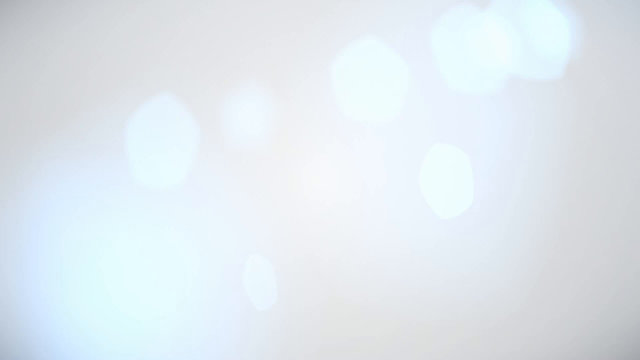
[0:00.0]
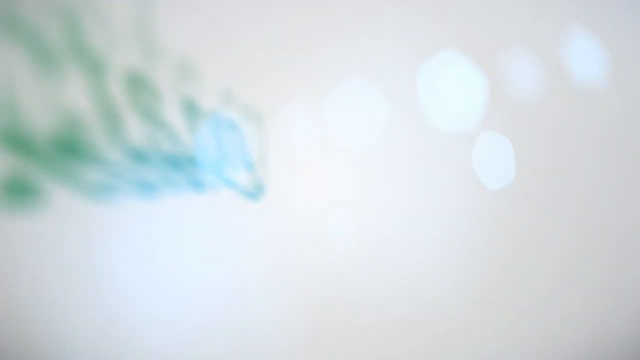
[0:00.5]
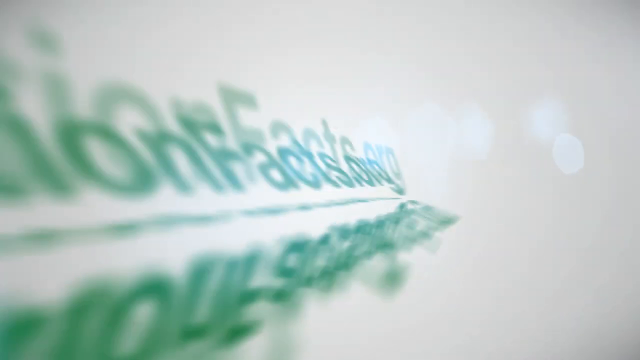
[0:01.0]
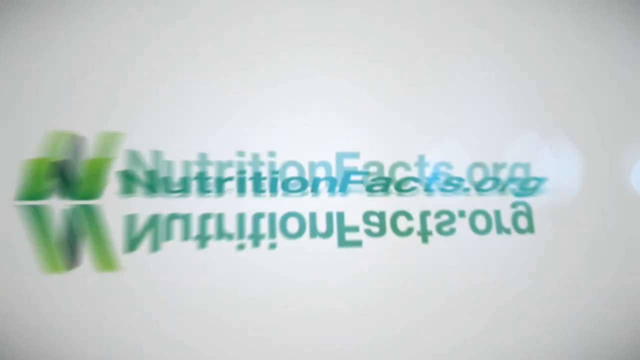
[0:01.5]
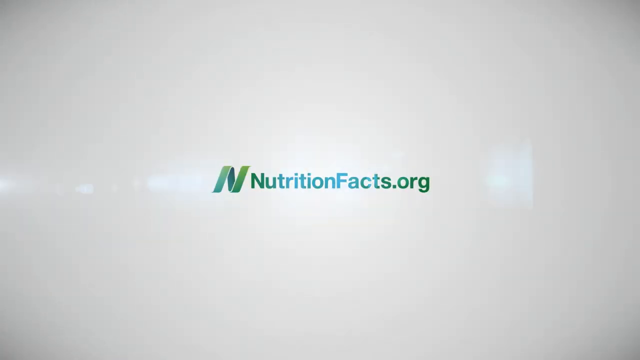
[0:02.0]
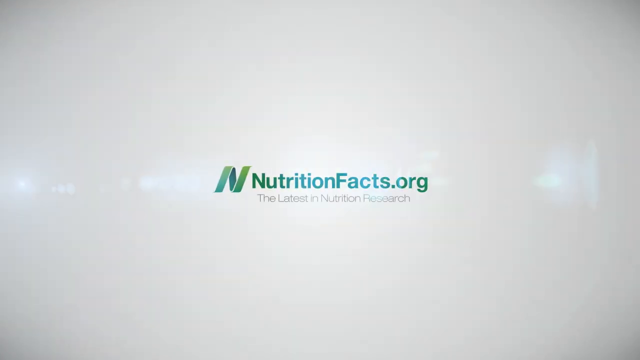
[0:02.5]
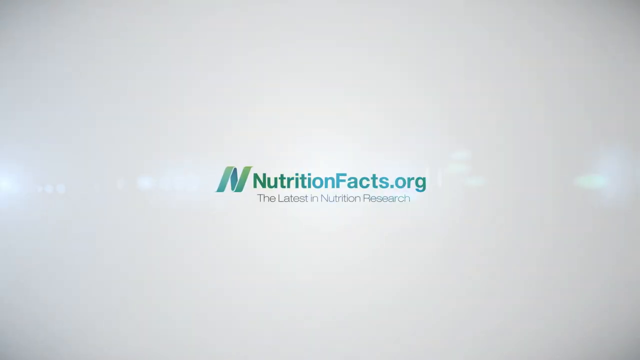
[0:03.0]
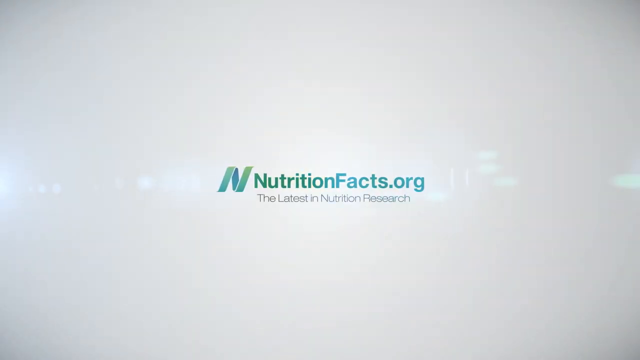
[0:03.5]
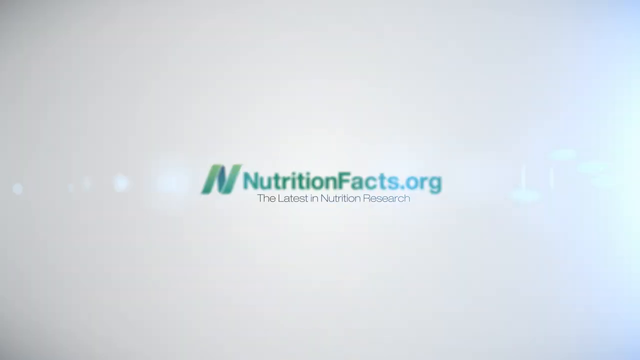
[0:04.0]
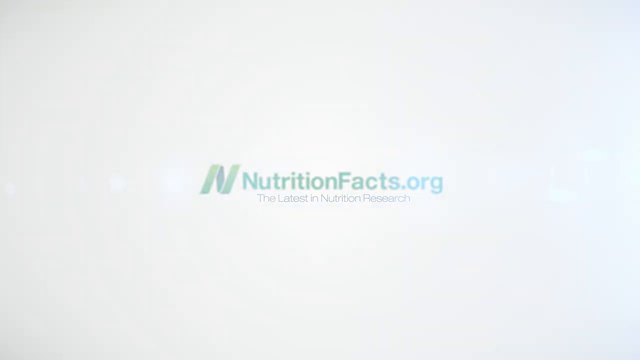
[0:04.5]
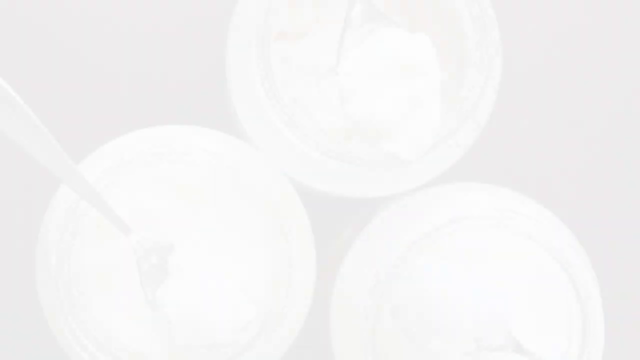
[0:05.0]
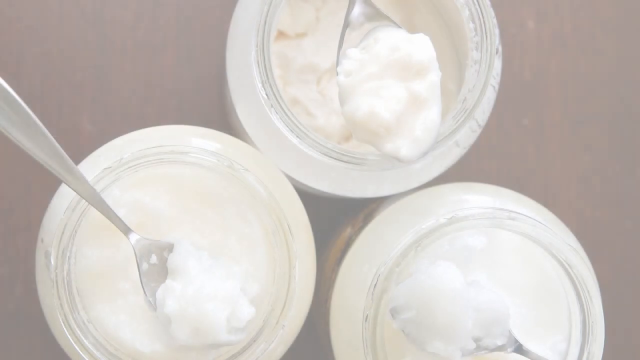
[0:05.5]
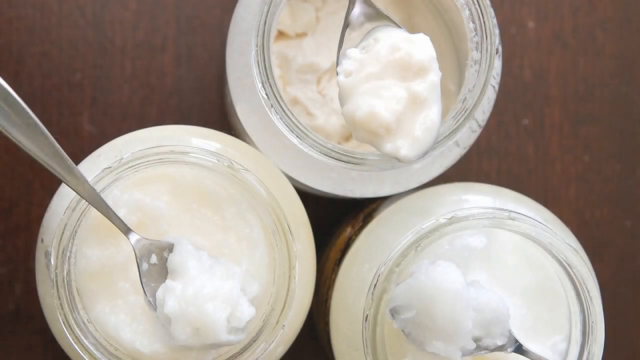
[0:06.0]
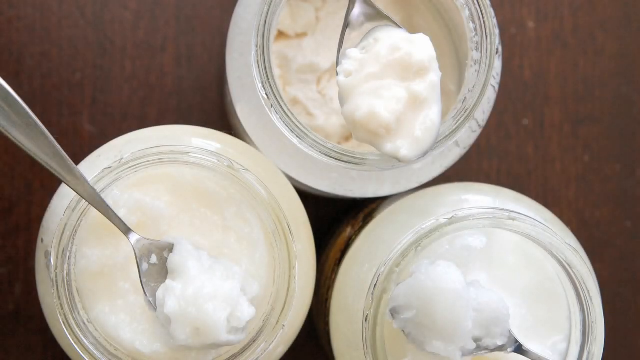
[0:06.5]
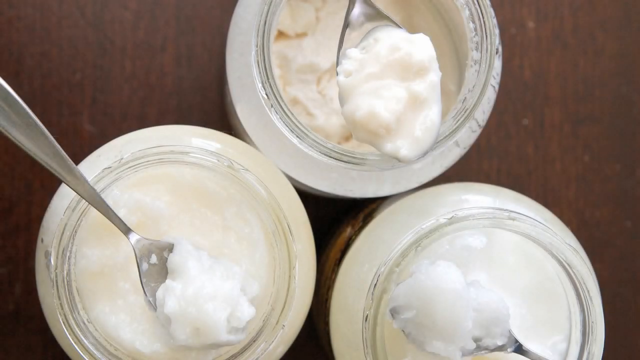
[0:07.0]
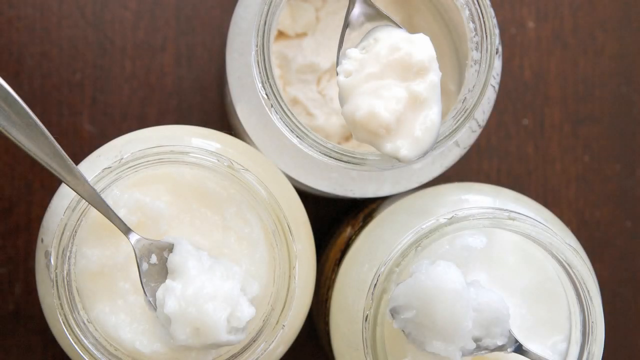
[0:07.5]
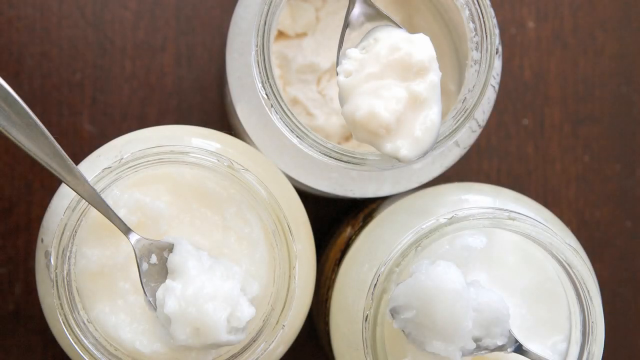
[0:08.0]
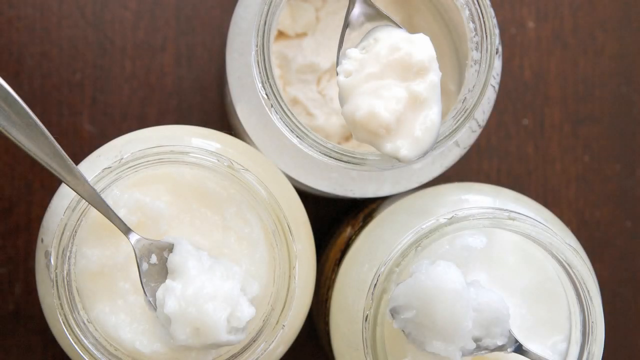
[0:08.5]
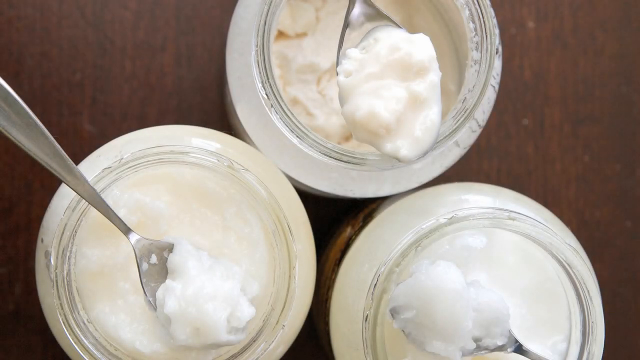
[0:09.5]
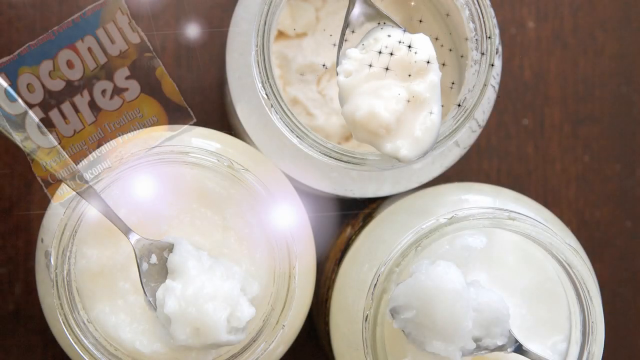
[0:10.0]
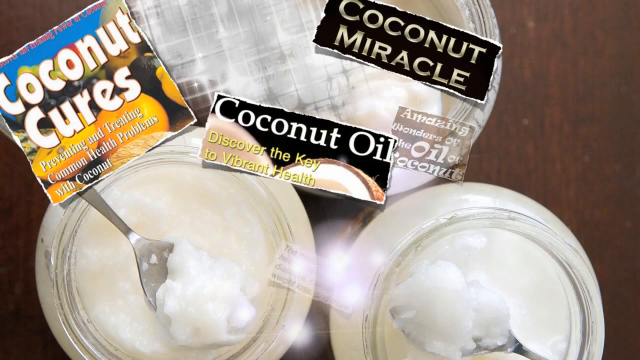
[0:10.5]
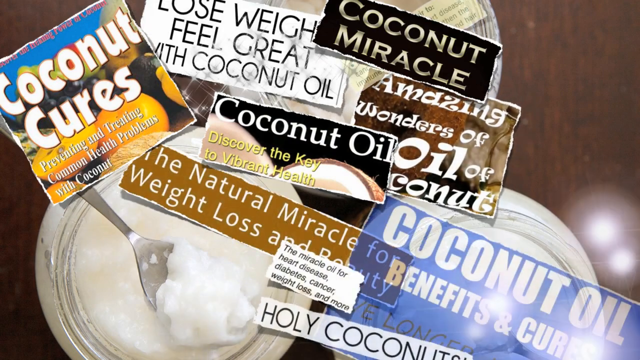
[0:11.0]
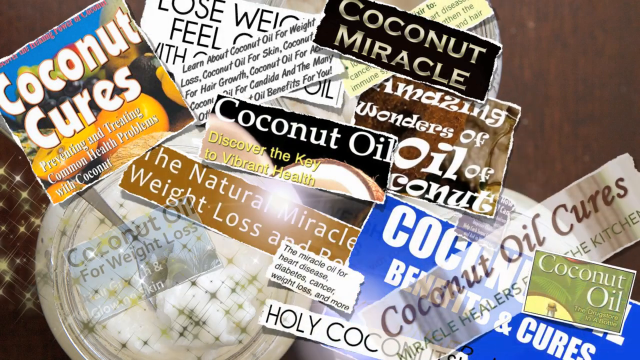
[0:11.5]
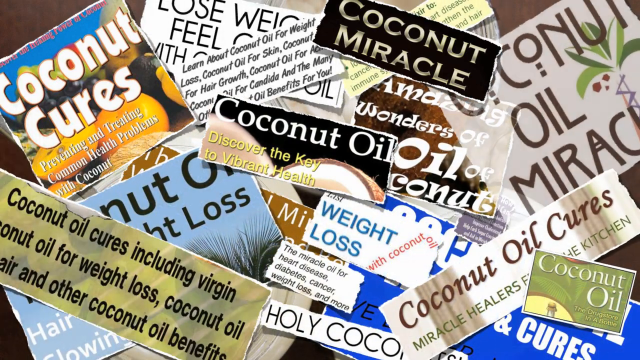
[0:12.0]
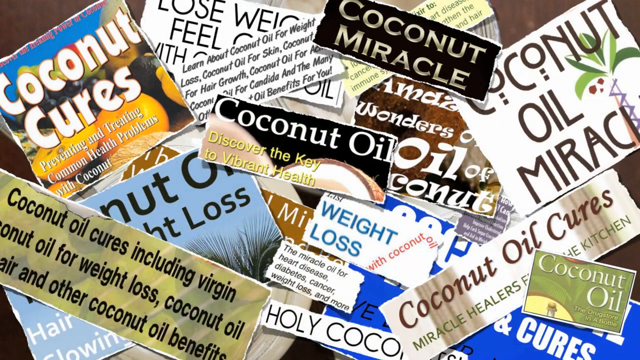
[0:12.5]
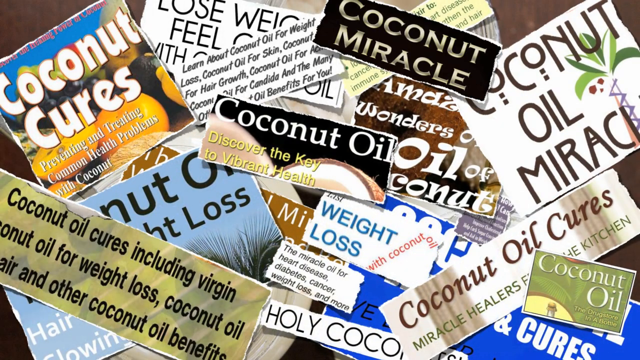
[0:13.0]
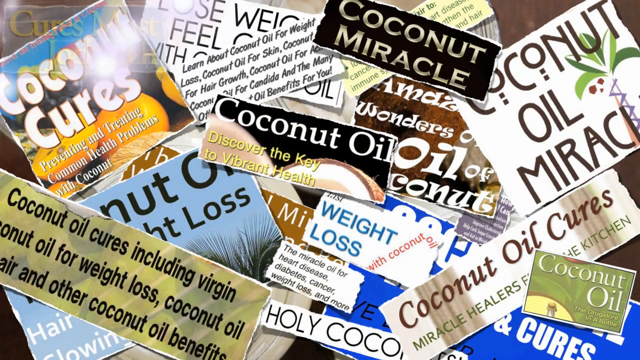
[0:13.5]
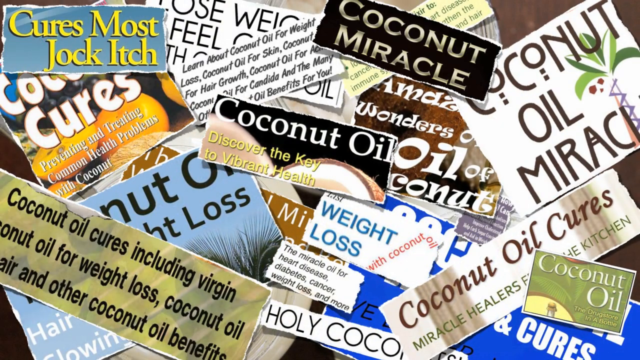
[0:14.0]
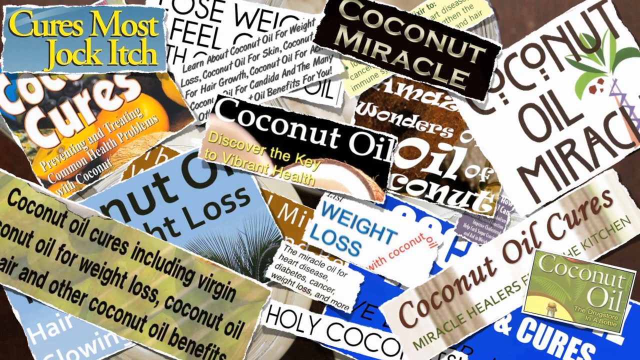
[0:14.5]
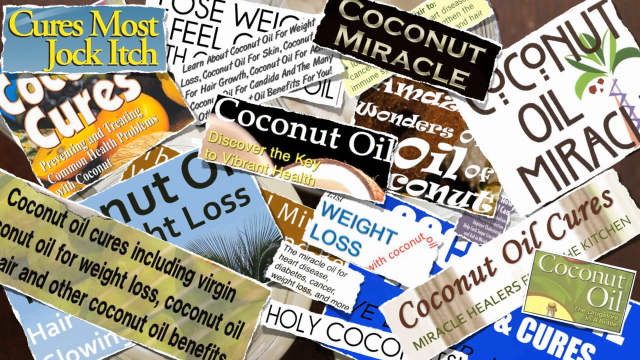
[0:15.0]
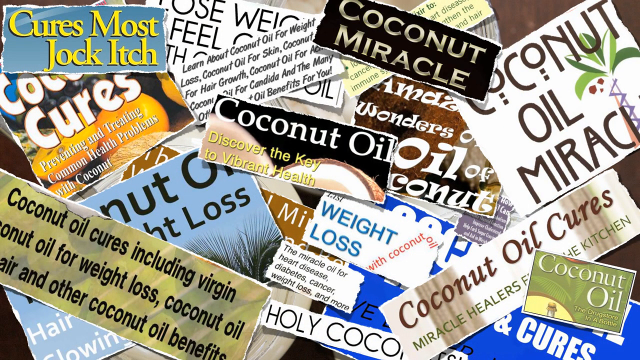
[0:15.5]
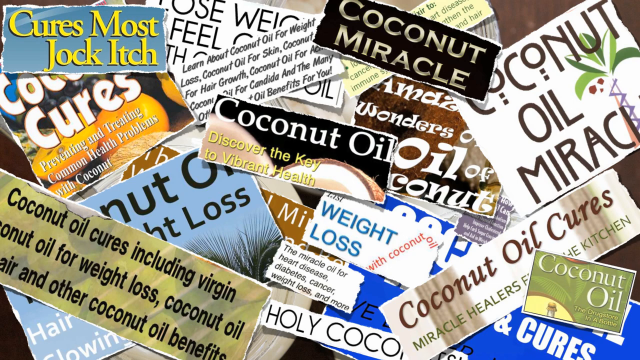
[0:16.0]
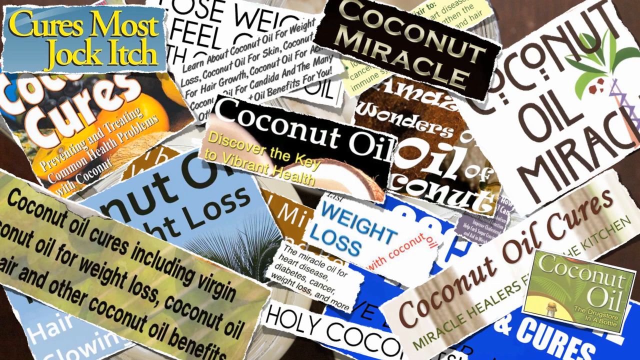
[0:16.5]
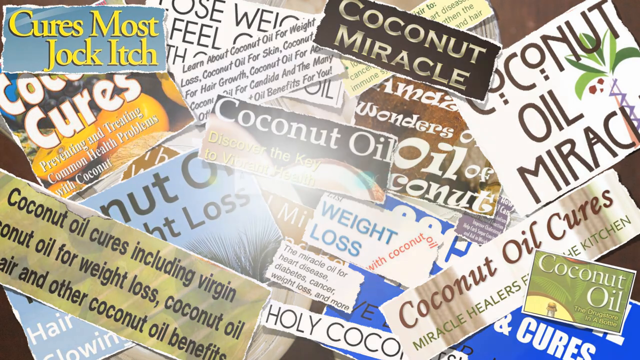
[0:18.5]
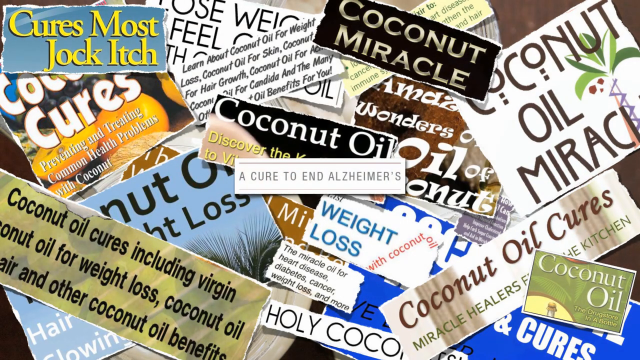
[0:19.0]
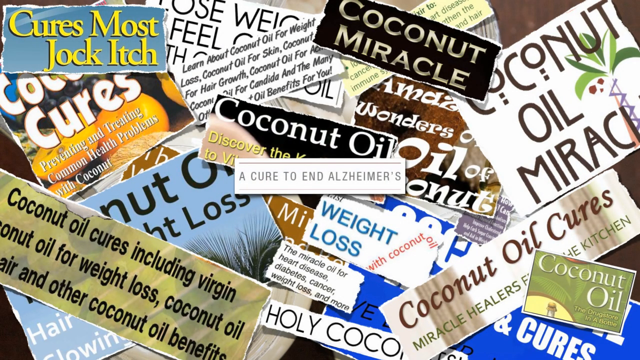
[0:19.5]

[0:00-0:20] The video starts with a white background, and animated green text flies in from all directions before settling in the middle of the screen. It reads "nutritionfacts.org", with a logo at the start that is kind of an N like a ribbon, and a tagline underneath in grey reads "the latest in nutrition research". The screen kind of goes bright and the text disappears, fading completely to white. An image comes into view: a brown background looking down on three pots of what looks like coconut oil. One of the pots has its paper kind of ripped, and some of the coconut oil is kind of oozing out. The pot on the left has a teaspoon placed in it. Starting from the top, animated snippets of magazines come onto the image of the jars and teaspoons and start covering it like a collage. One reads "Coconut Miracle", another reads "Coconut Oil, Discover the Key to Vibrant Health", and a small one with black text reads "The Miracle Oil for Heart Disease, Diabetes, Cancer, Weight Loss and more". More and more cutouts from magazines and newspapers appear, all covering each other, until a final one with yellow text appears at the top left reading "cures most jock itch".